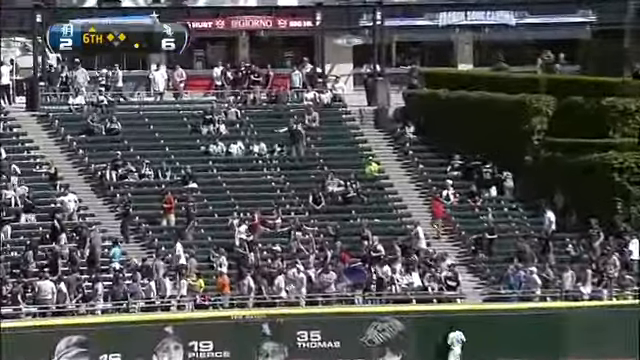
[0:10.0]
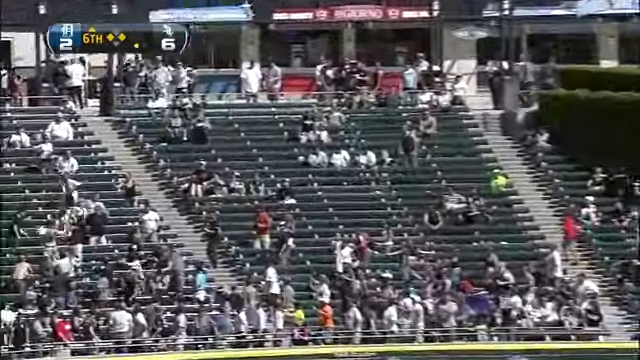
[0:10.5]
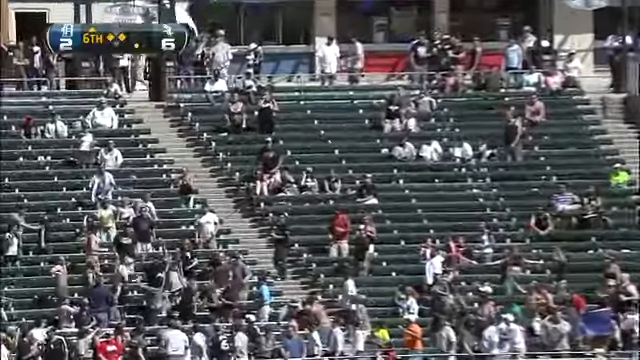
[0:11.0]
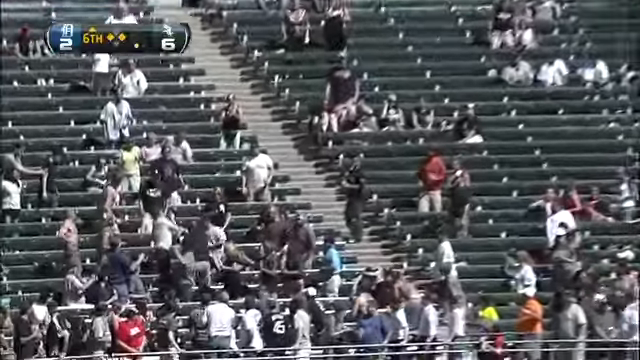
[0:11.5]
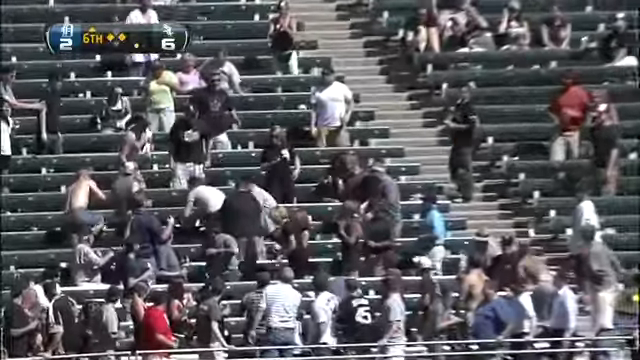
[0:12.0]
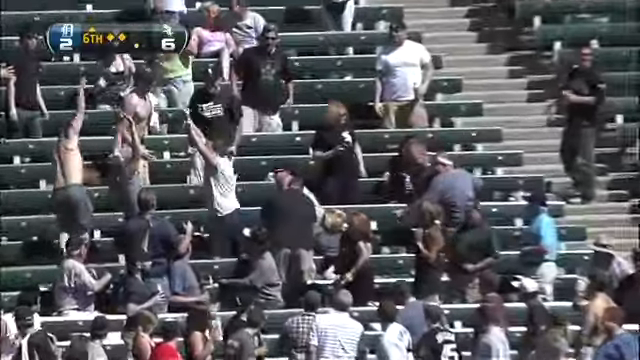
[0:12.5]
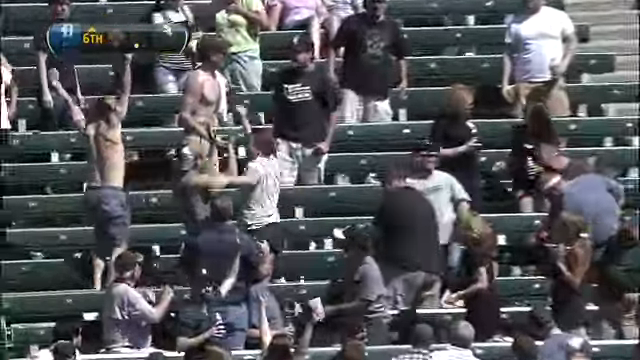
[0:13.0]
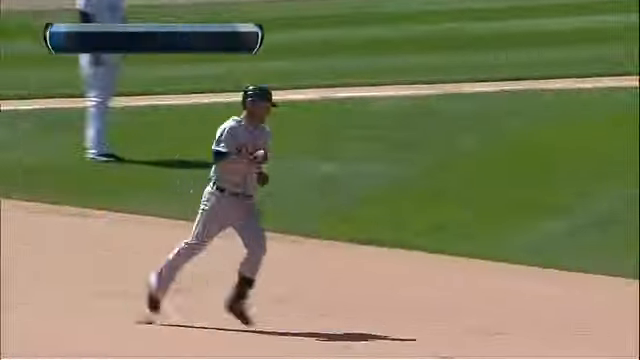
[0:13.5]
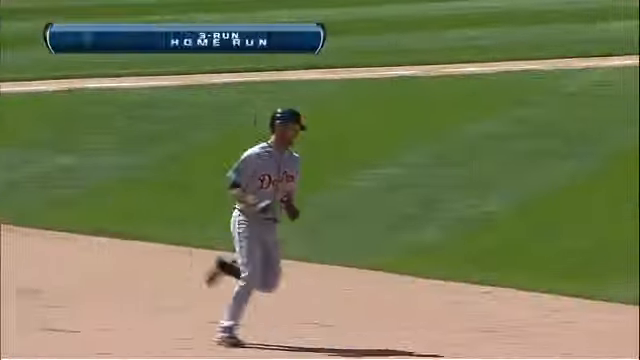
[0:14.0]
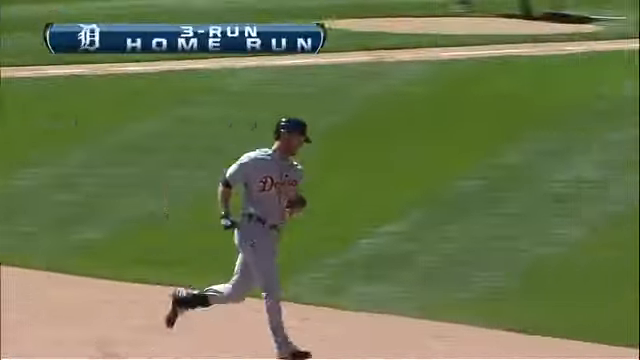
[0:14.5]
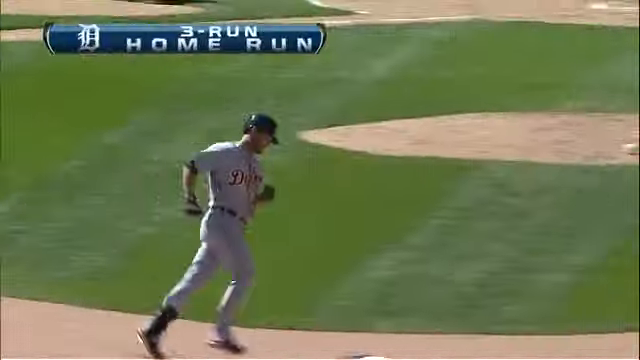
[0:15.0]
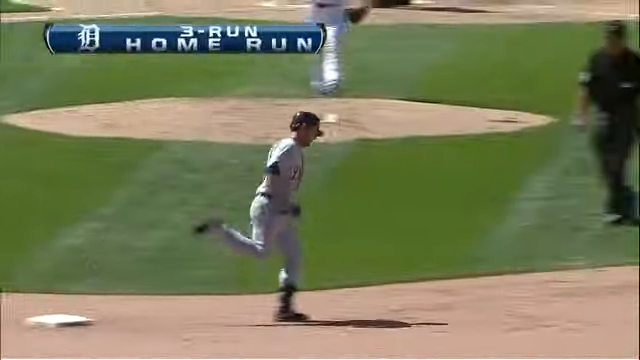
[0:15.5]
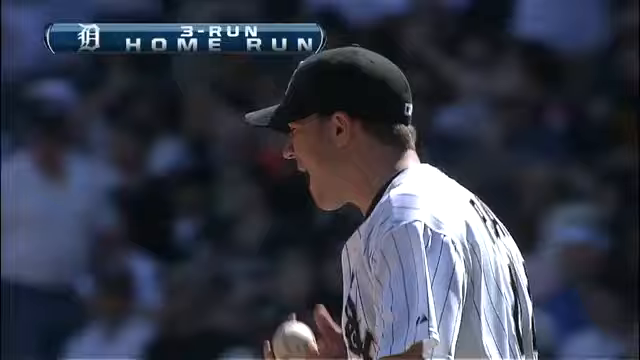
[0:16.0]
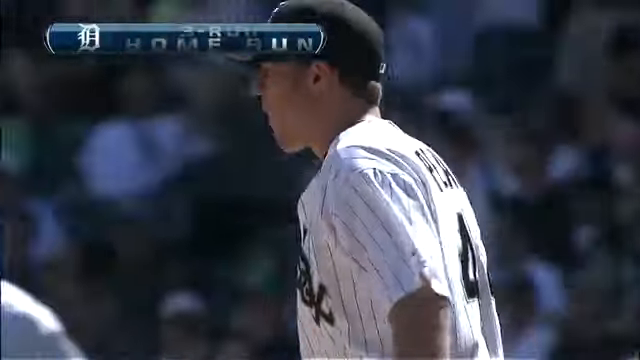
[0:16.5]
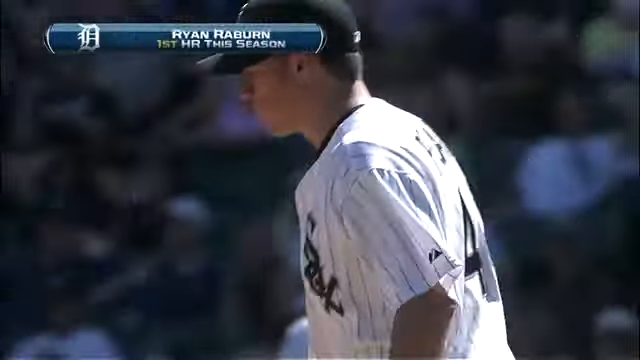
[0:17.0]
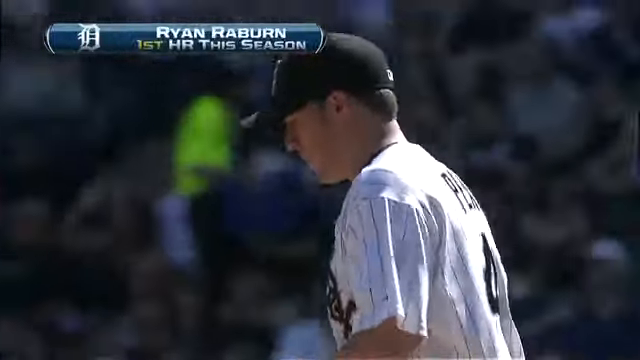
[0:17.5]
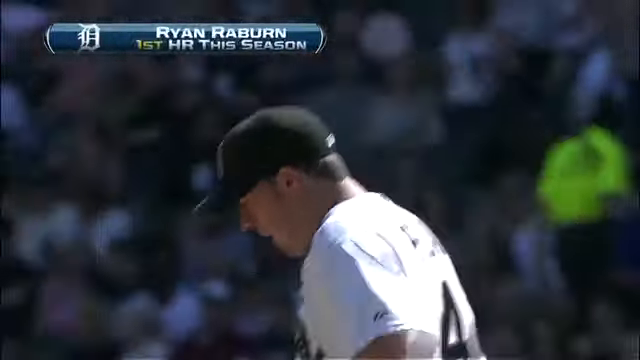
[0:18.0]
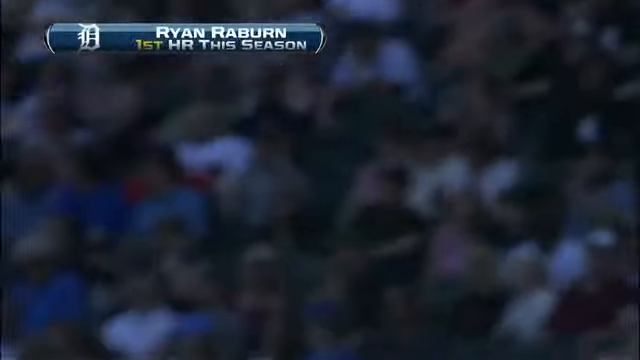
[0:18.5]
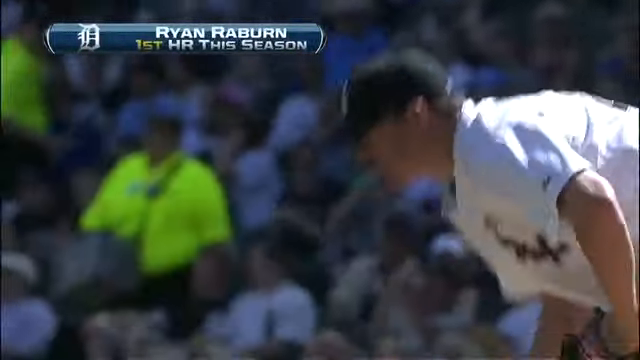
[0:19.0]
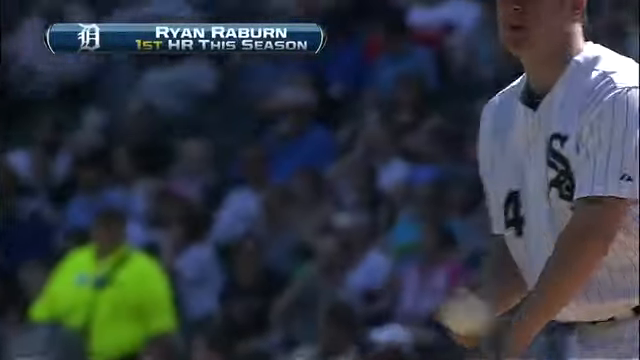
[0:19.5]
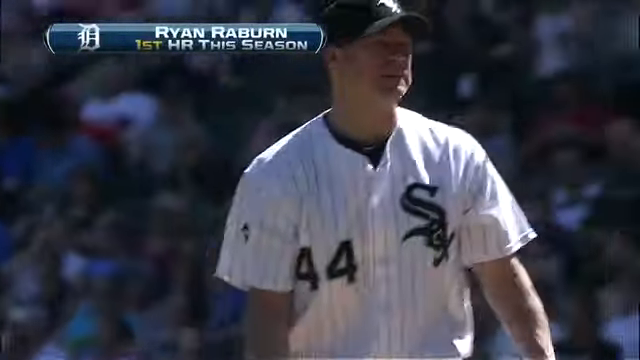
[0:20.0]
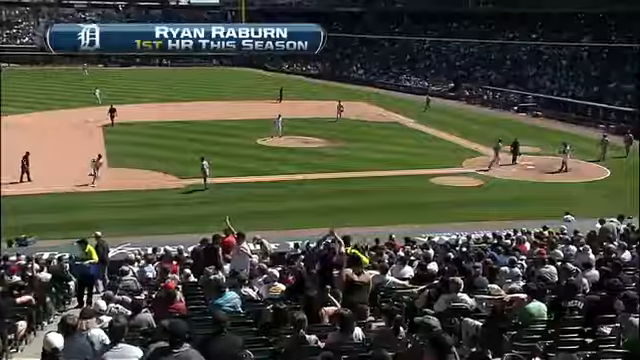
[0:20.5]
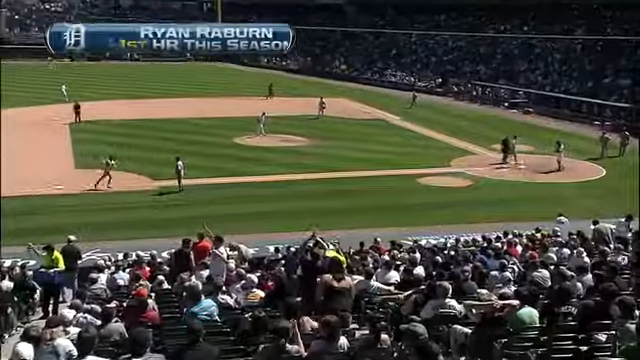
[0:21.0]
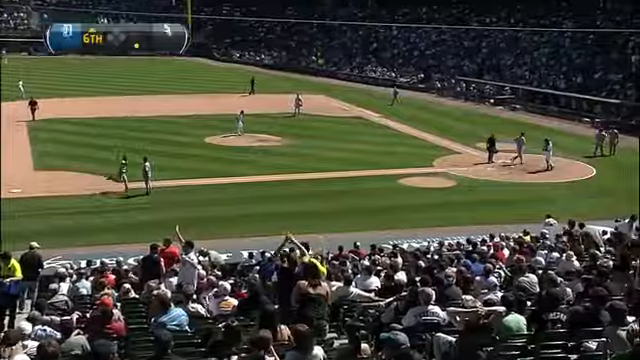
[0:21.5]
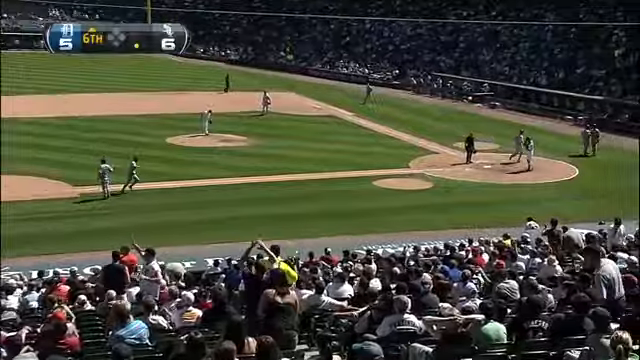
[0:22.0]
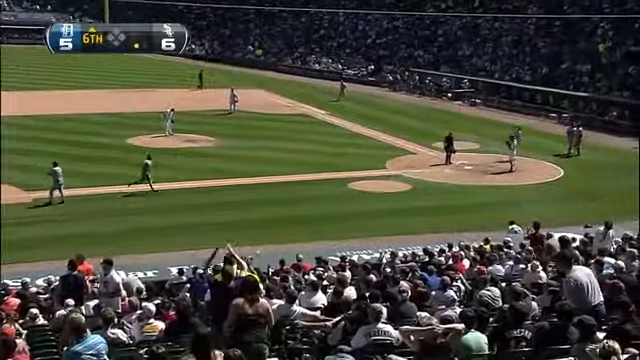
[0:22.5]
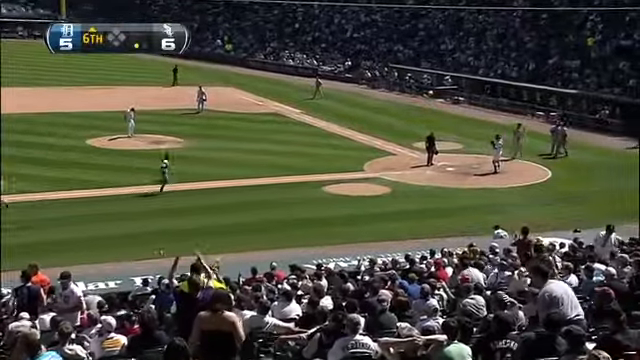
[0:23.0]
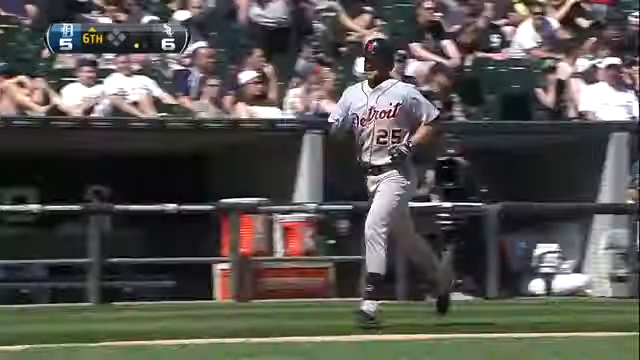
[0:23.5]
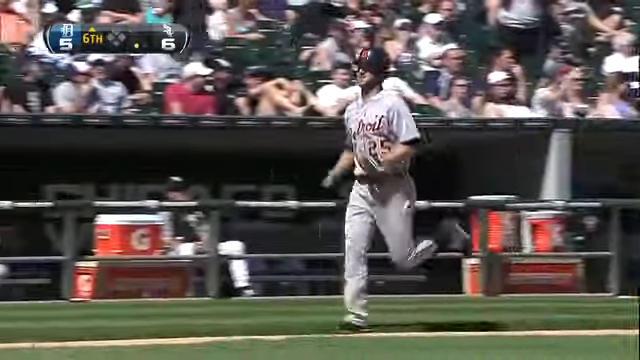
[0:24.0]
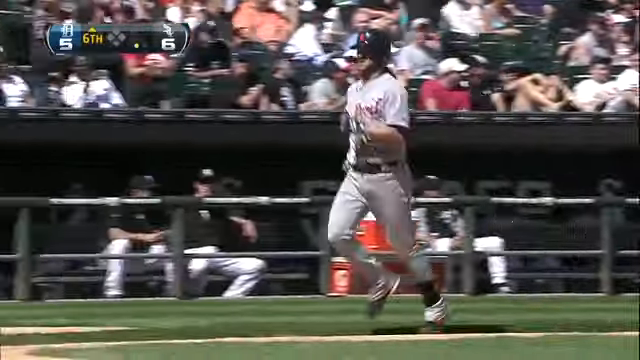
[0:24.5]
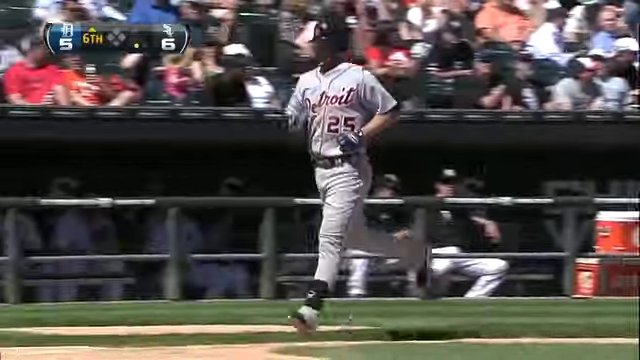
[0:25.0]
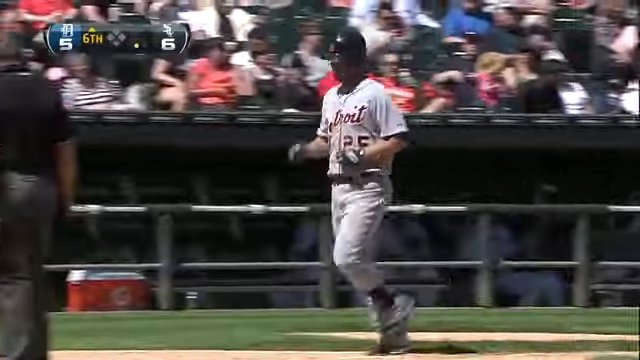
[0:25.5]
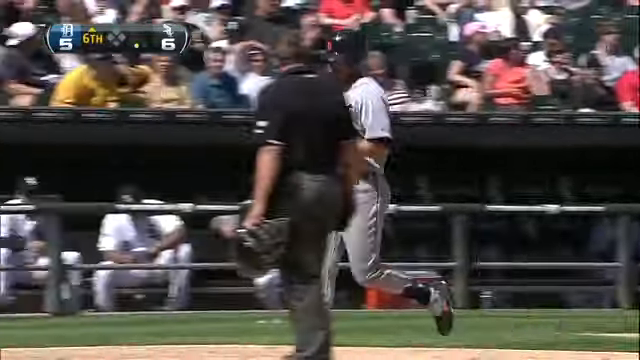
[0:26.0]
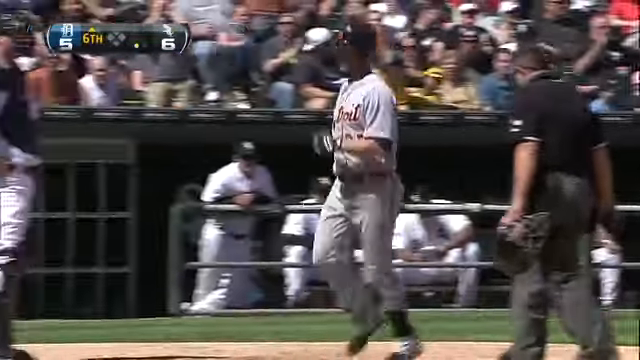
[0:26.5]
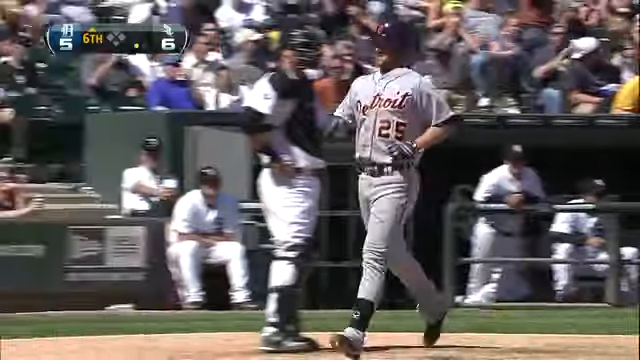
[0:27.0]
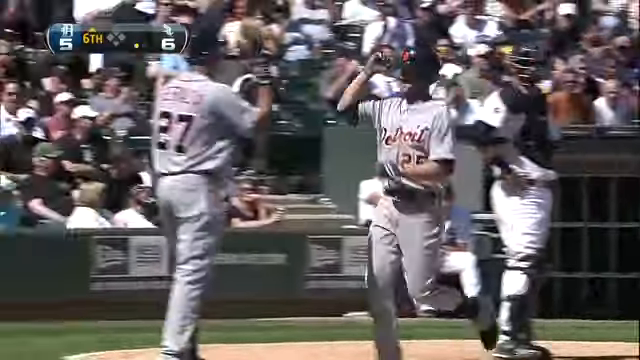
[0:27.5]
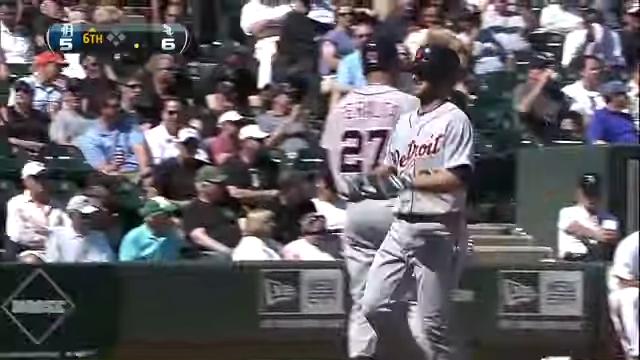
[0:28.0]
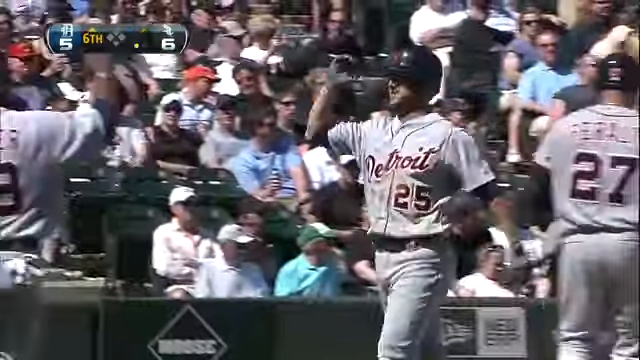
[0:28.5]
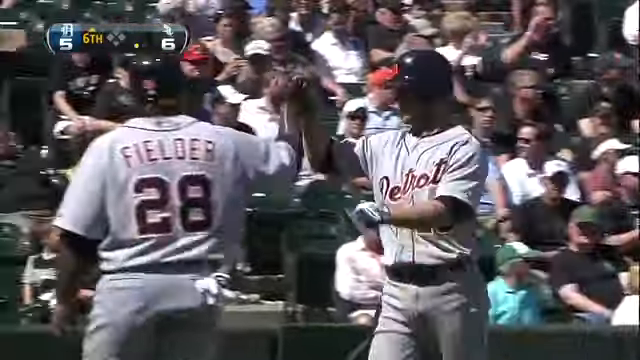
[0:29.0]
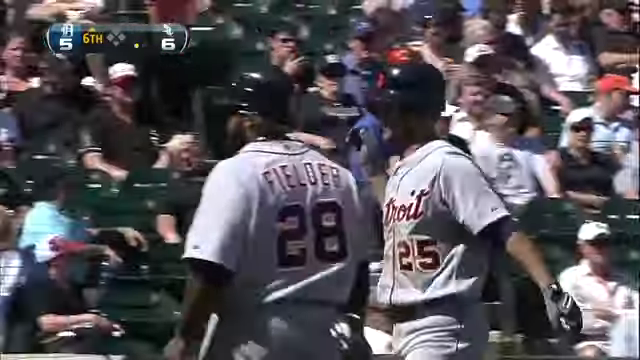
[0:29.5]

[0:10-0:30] Many people watch a cricket game being played. The setting then changes to the cricket field, where players are bowling and batting. The players give each other high fives, and the spectators are excited because their team seems to be winning. The players wear white gear: white pants and white shirts with a bit of red. One of the shirts has the number 25. The spectators scream, jump for joy and hug each other, as the game seems to be going in their favor. The field has green grass with patches of dusty areas.